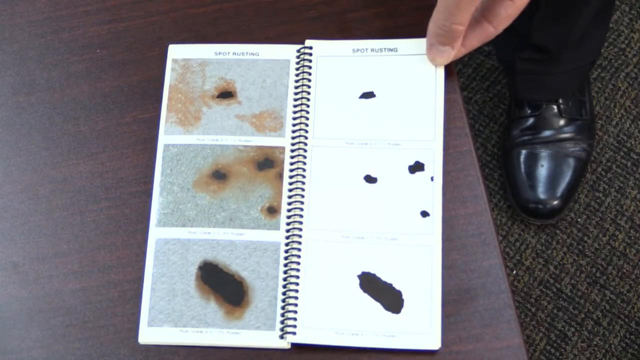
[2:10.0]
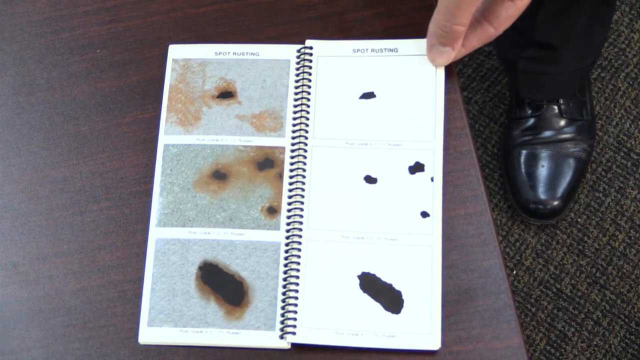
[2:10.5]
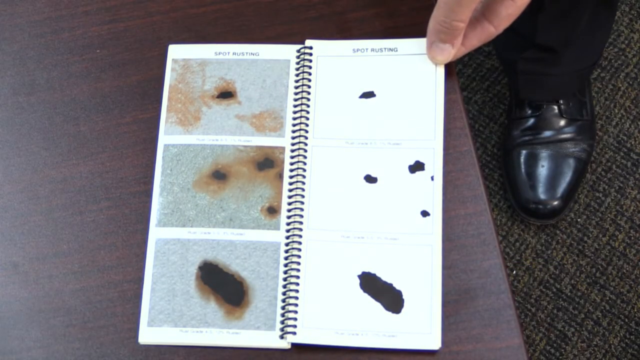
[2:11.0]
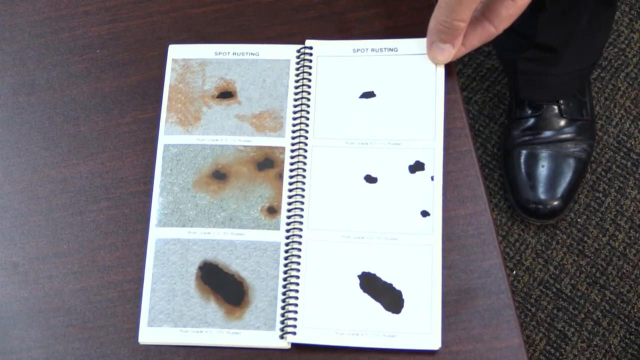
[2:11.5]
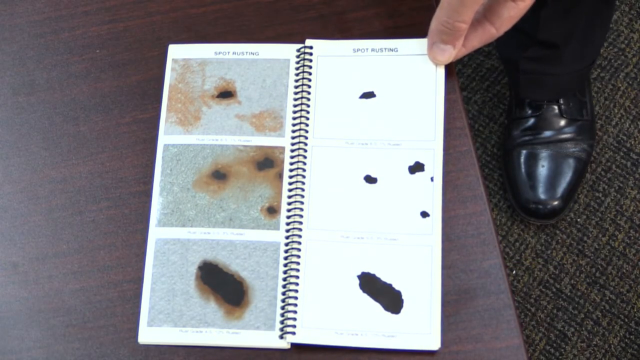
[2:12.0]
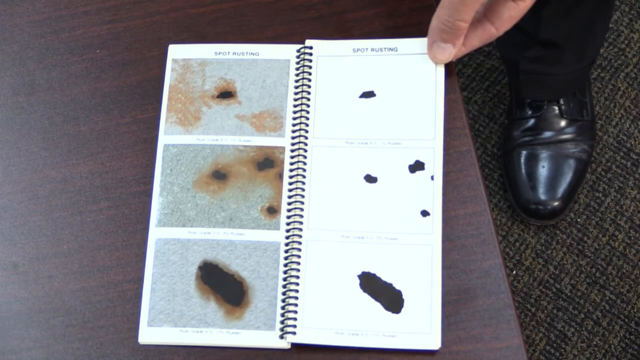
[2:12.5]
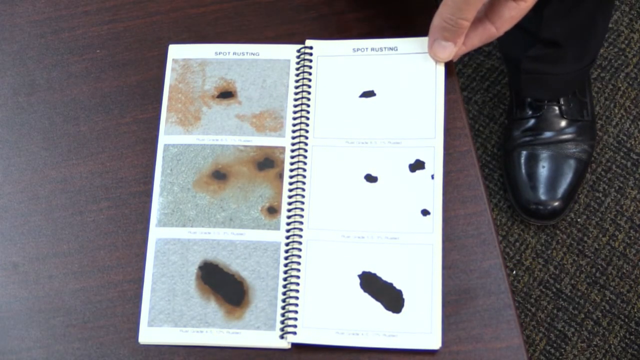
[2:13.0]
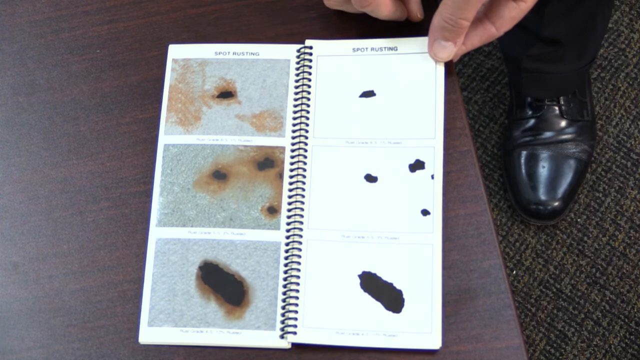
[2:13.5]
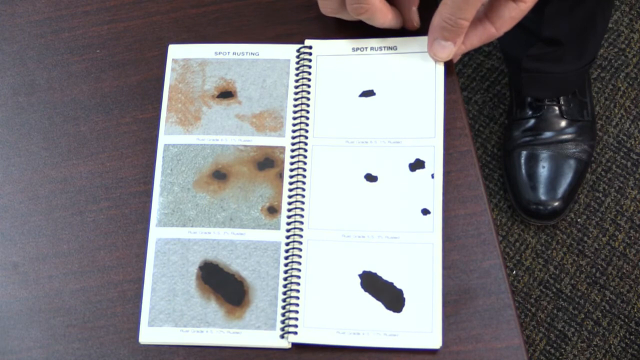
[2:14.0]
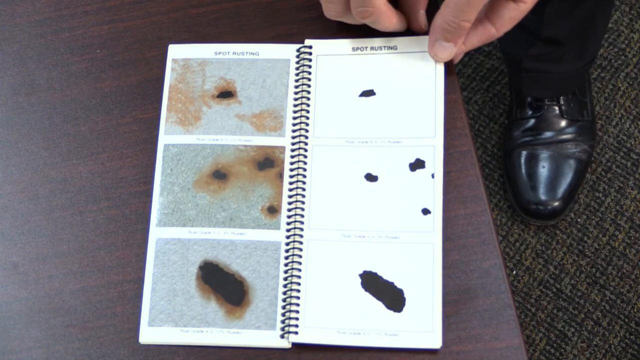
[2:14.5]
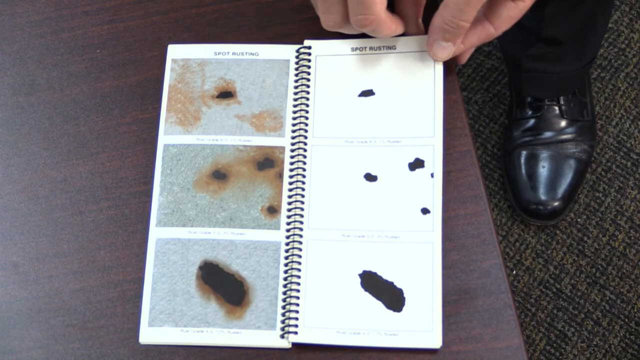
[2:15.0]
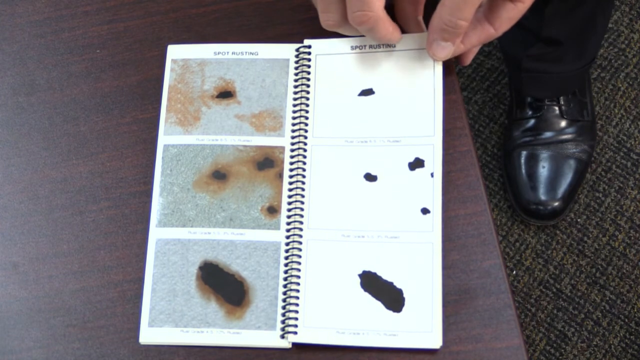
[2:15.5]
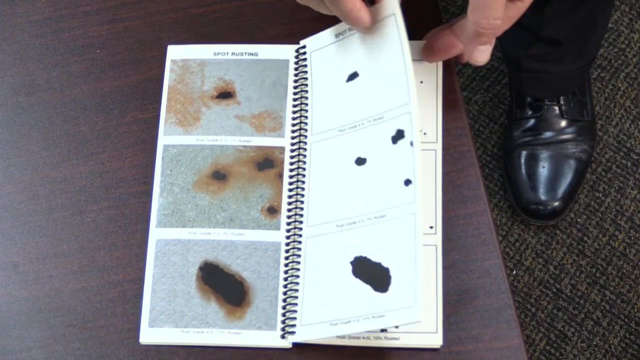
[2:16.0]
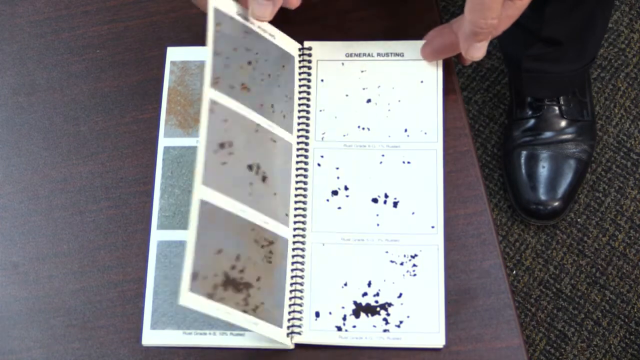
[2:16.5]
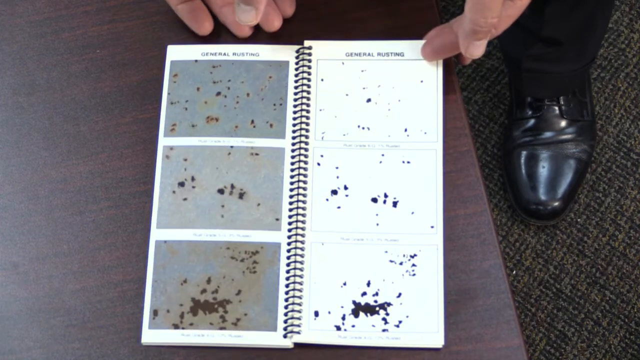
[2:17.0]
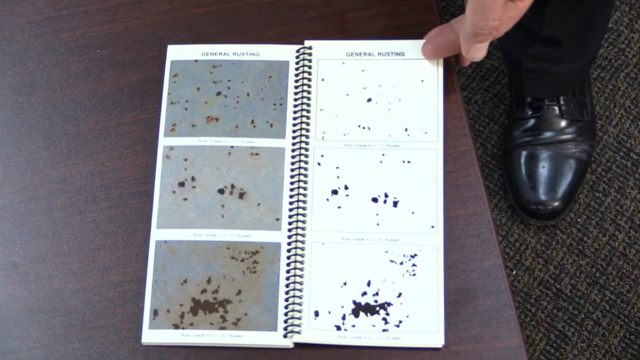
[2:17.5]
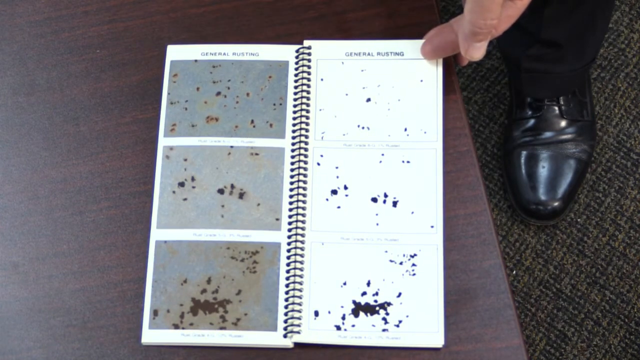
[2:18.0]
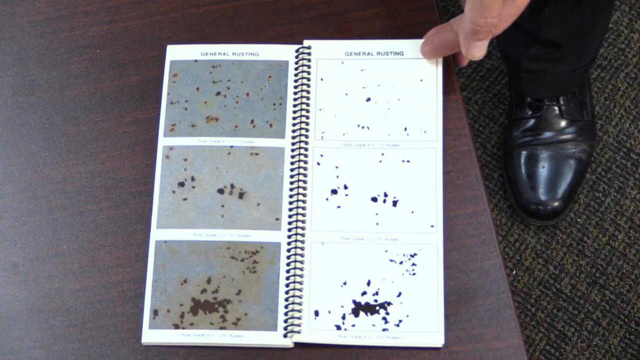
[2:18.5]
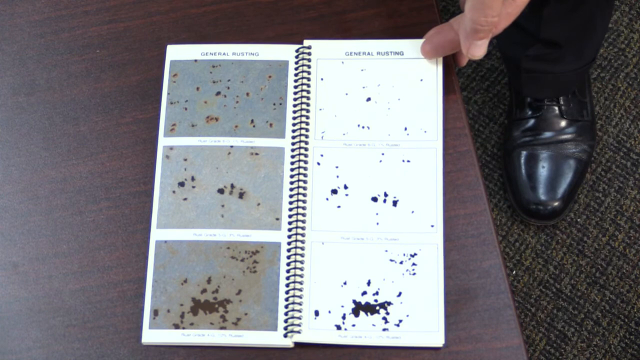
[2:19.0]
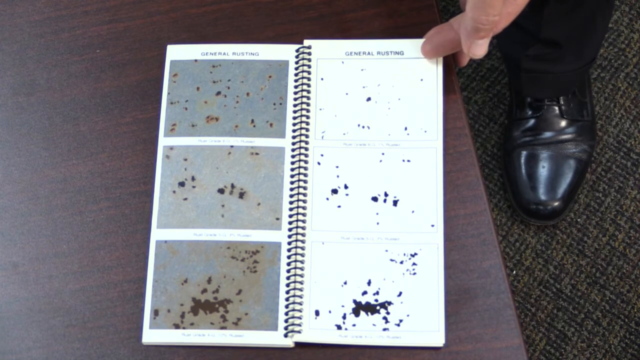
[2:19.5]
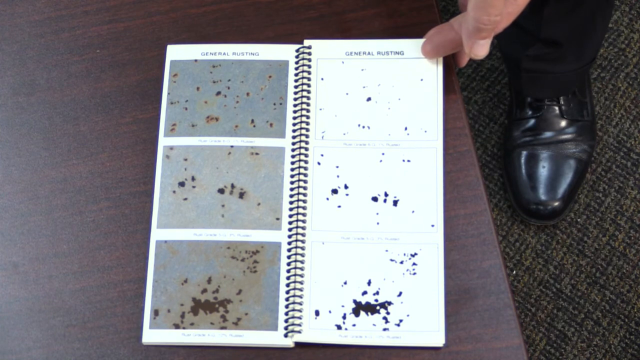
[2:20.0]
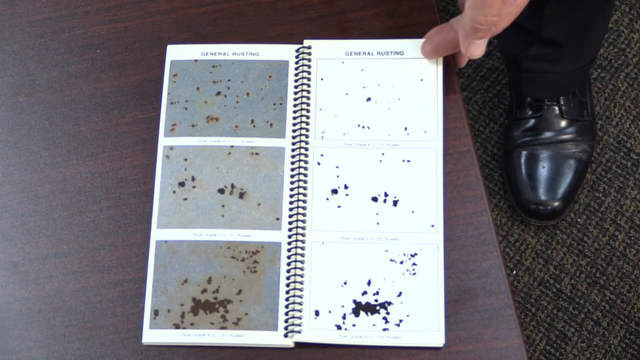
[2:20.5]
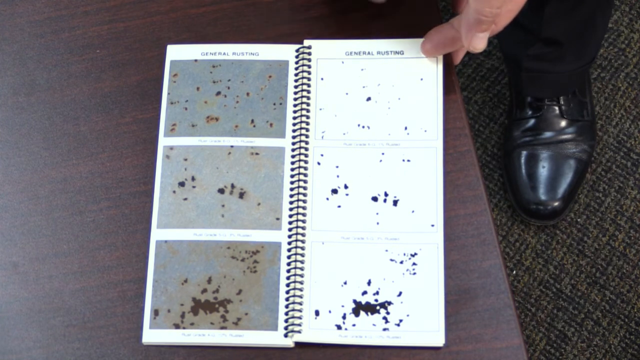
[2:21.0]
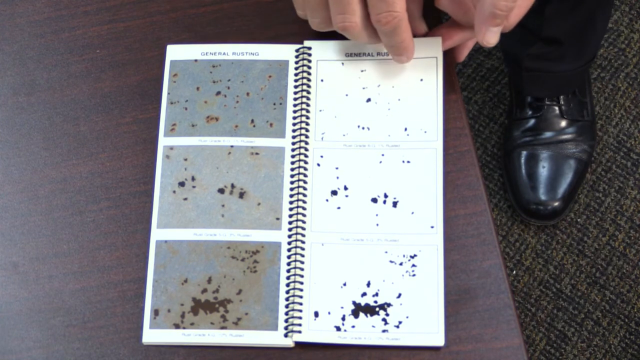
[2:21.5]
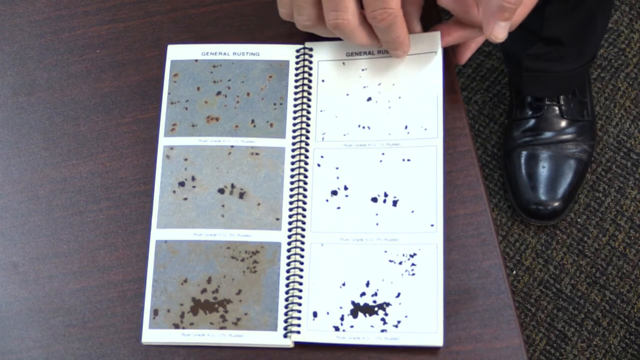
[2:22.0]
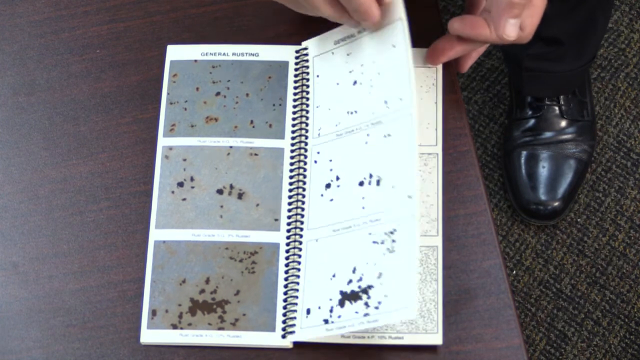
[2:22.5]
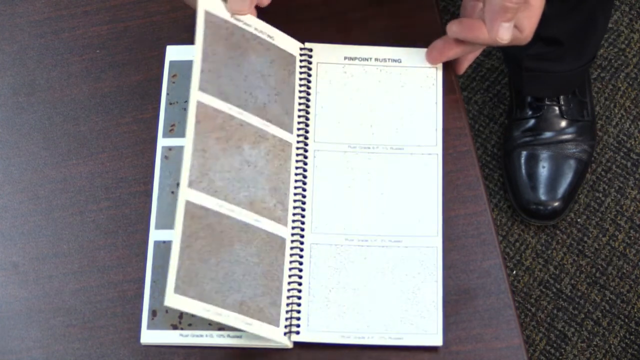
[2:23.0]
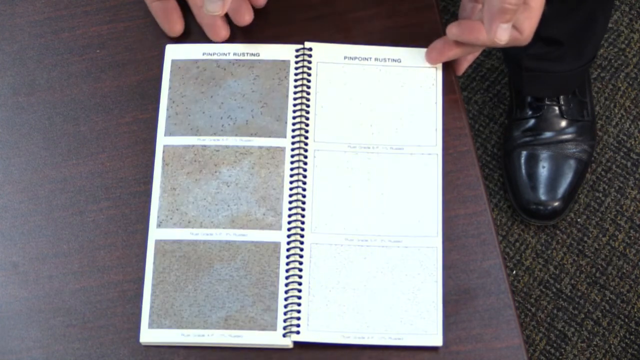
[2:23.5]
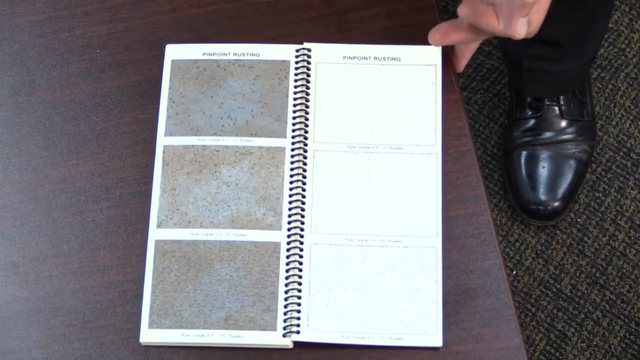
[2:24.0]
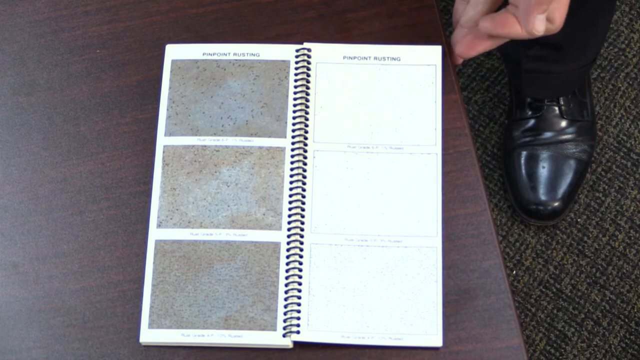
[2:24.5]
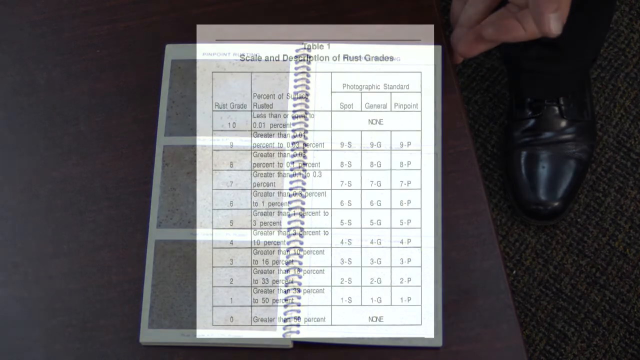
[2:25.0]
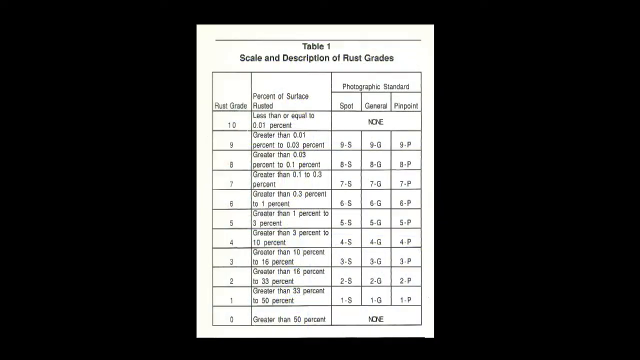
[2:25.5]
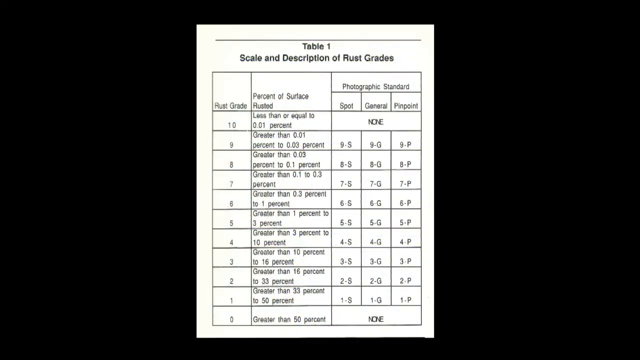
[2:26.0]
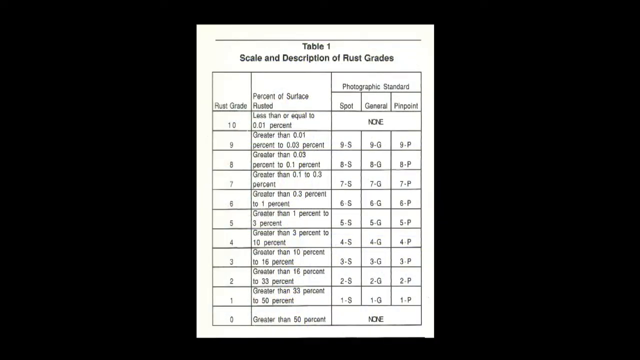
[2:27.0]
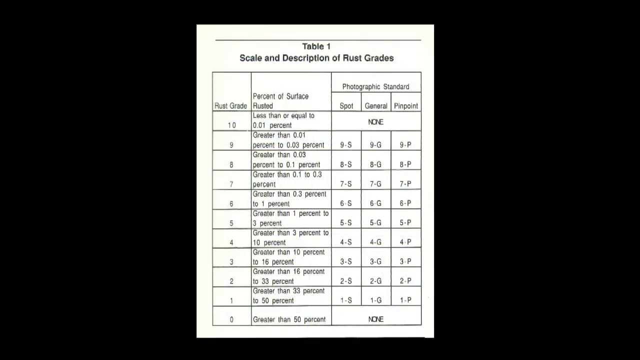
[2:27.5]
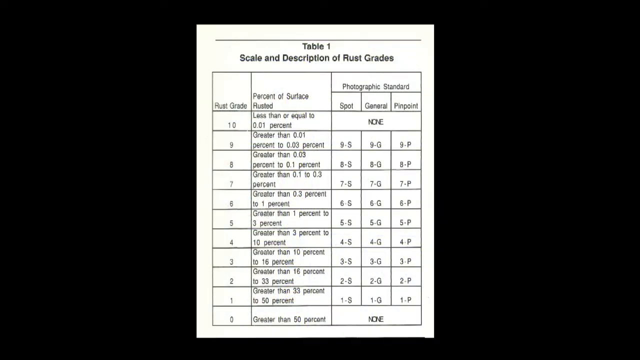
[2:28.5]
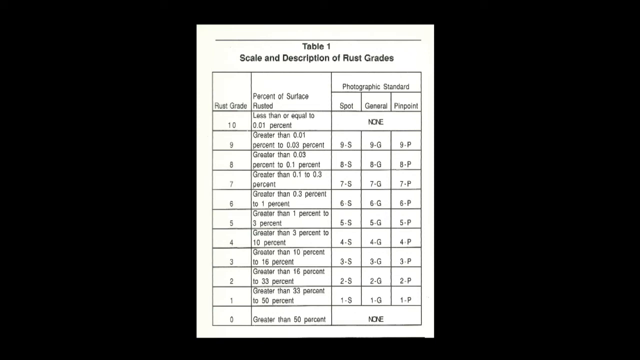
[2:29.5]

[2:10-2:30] The lecturer opens a book showing the different types of rusting: spot rusting on the left-hand side, then, after the page is flipped, general rusting followed by pinpoint rusting. A table of the scale and description of rusting grades is shown: grade 10 is less than or equal to 0.01% surface rusting; grade 9 is greater than 0.01%, with photographic standards 9S for spot, 9G for general and 9P for pinpoint; grade 8 general is 8G; grade 1 is greater than 33% to 50%, with photographic standards 1S, 1G and 1P; and grade 0 is greater than 50%, with no photographic standard.